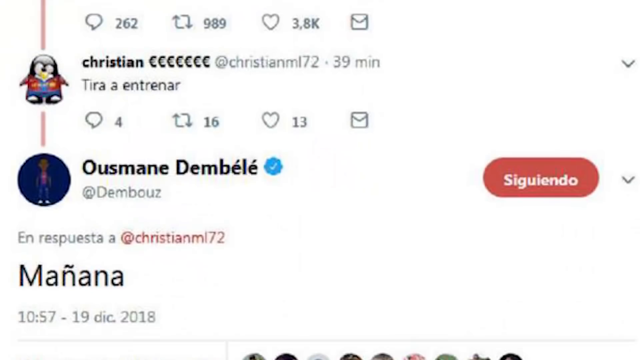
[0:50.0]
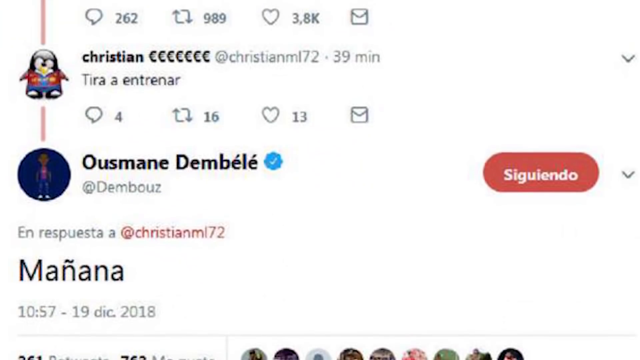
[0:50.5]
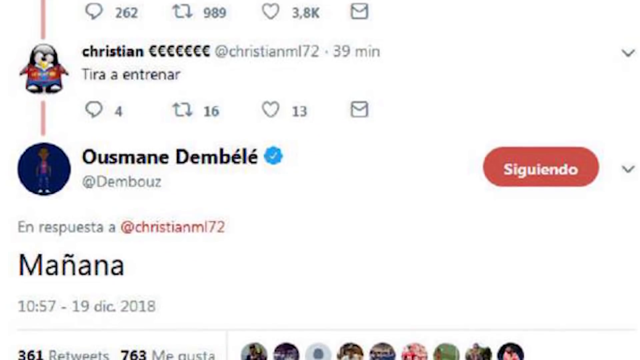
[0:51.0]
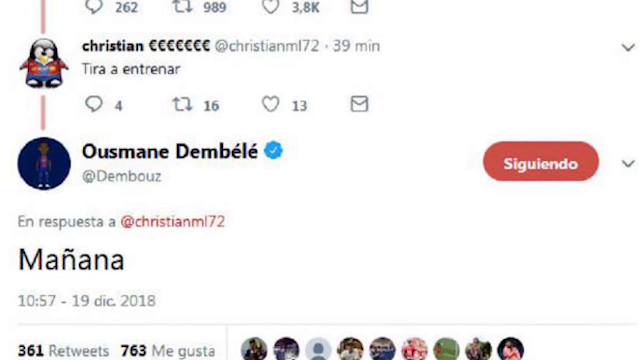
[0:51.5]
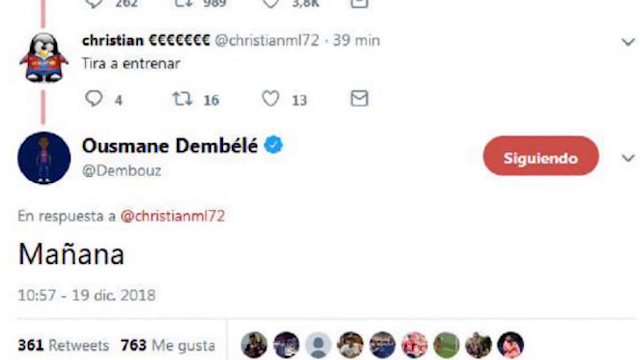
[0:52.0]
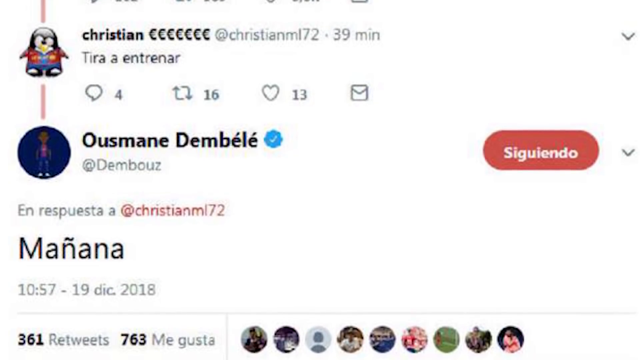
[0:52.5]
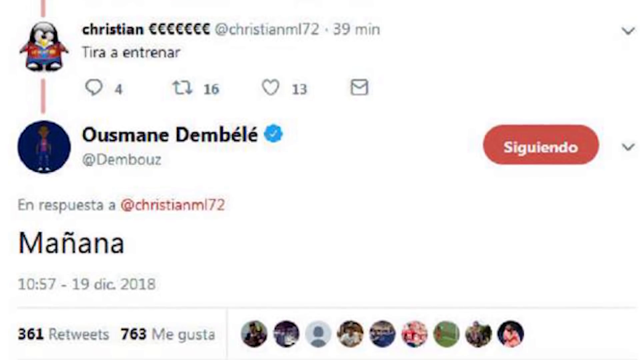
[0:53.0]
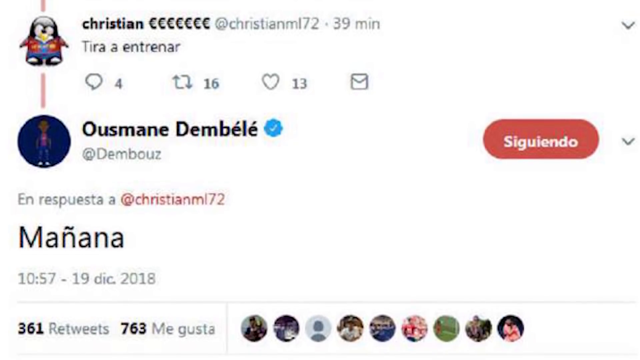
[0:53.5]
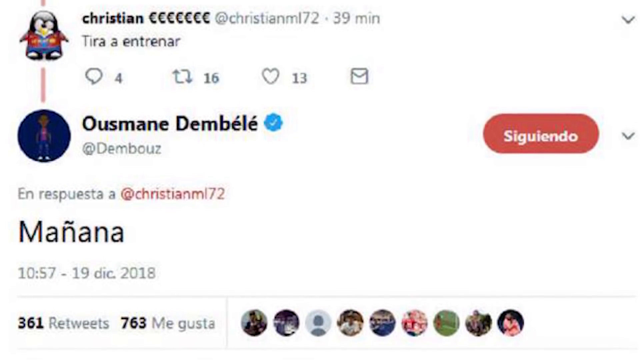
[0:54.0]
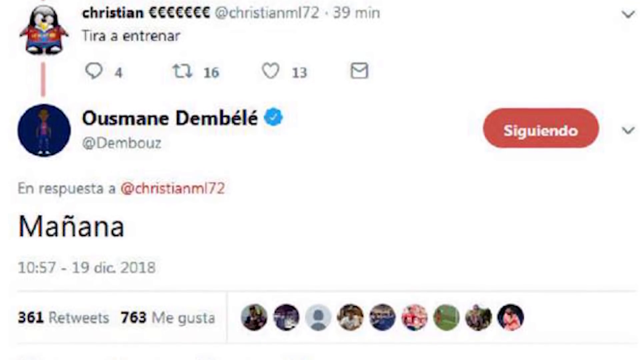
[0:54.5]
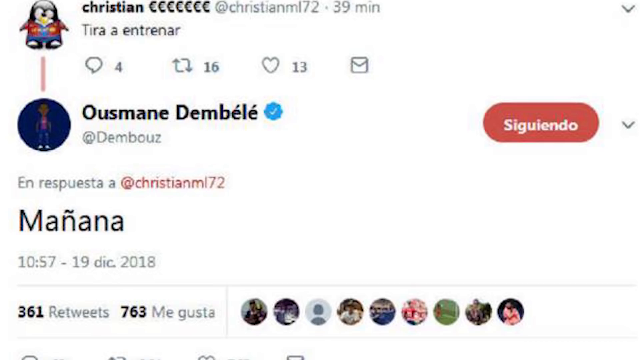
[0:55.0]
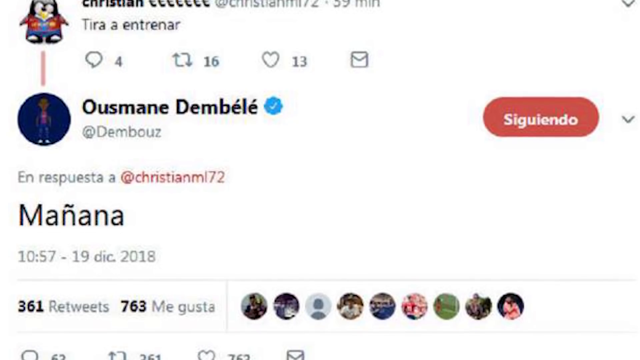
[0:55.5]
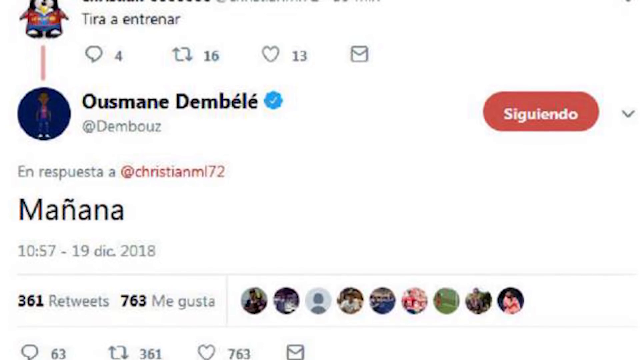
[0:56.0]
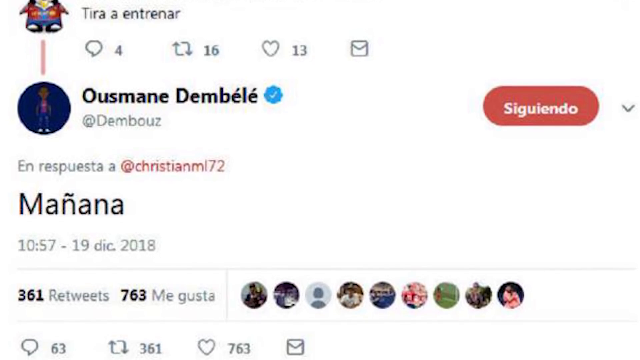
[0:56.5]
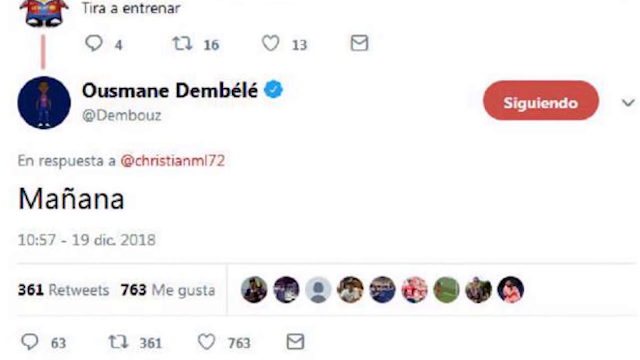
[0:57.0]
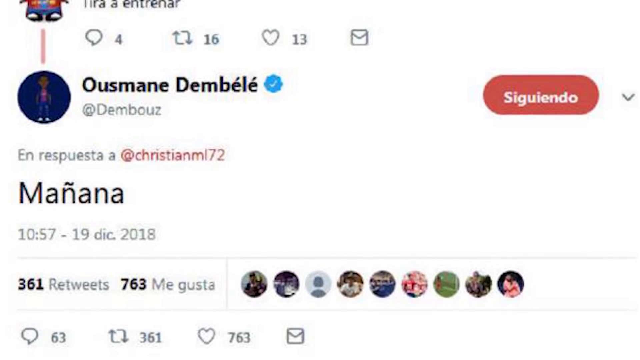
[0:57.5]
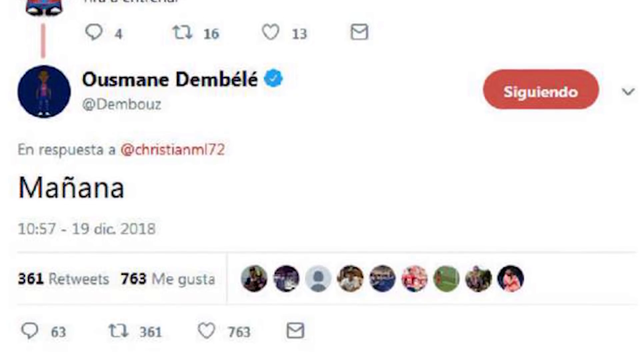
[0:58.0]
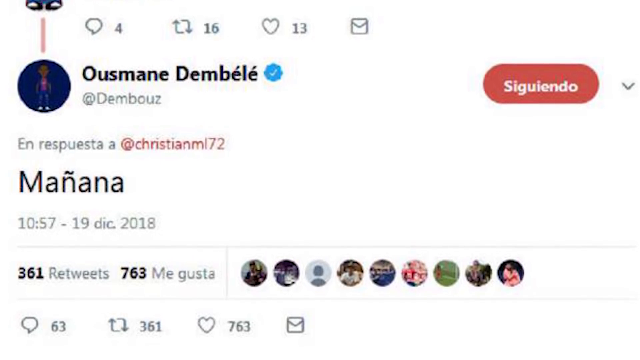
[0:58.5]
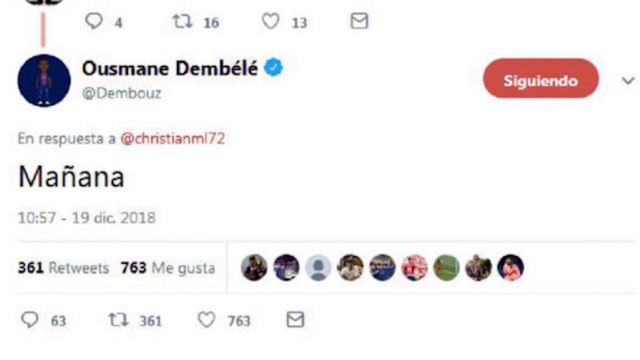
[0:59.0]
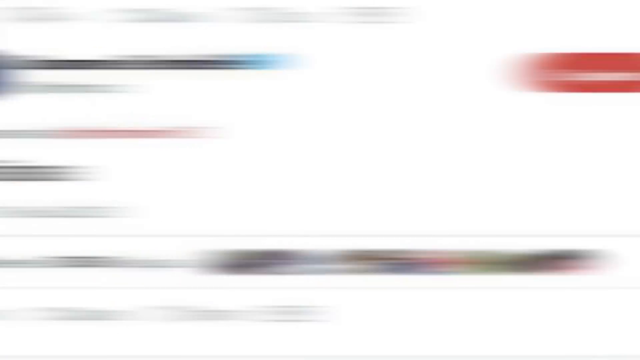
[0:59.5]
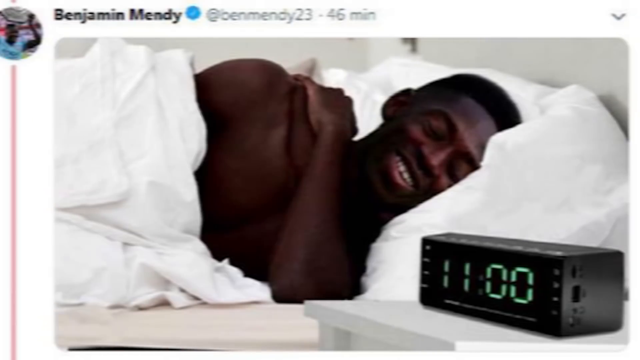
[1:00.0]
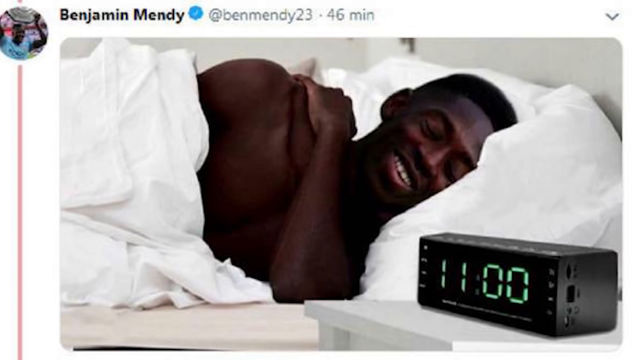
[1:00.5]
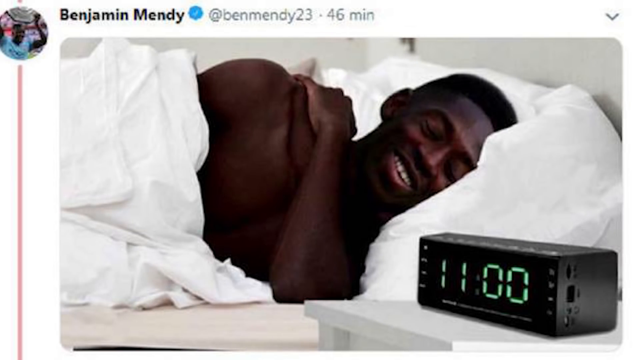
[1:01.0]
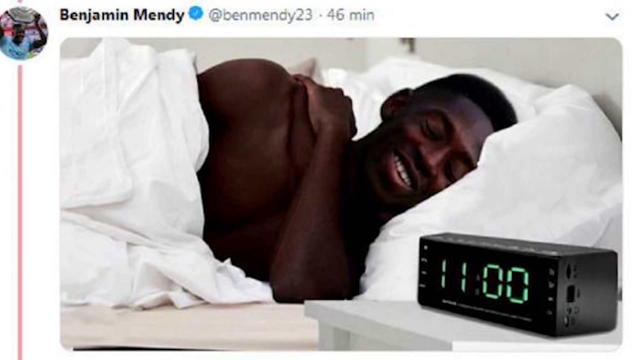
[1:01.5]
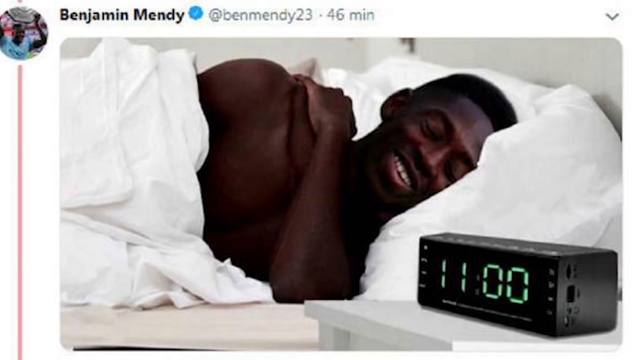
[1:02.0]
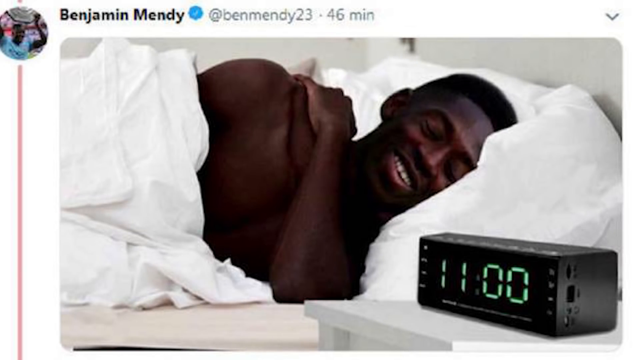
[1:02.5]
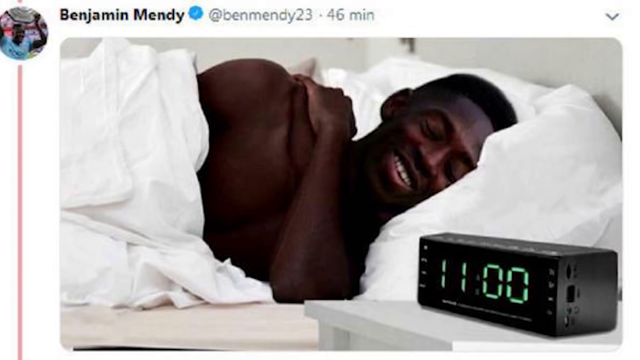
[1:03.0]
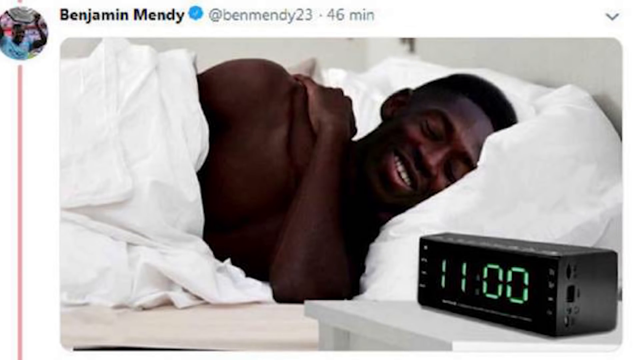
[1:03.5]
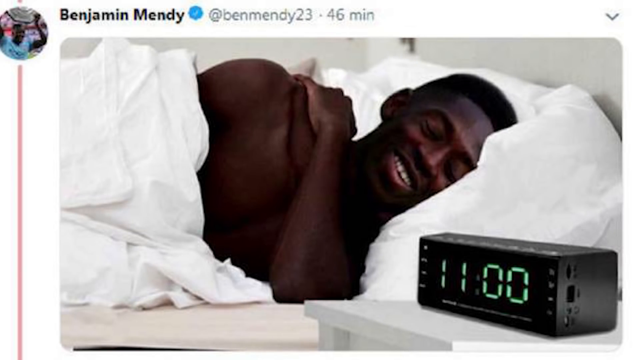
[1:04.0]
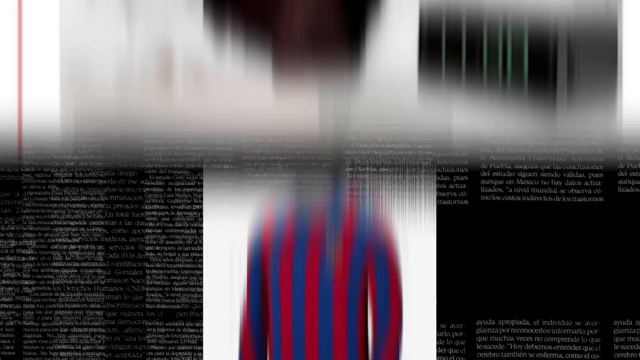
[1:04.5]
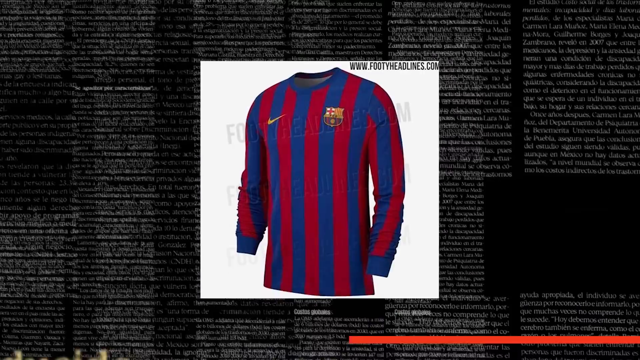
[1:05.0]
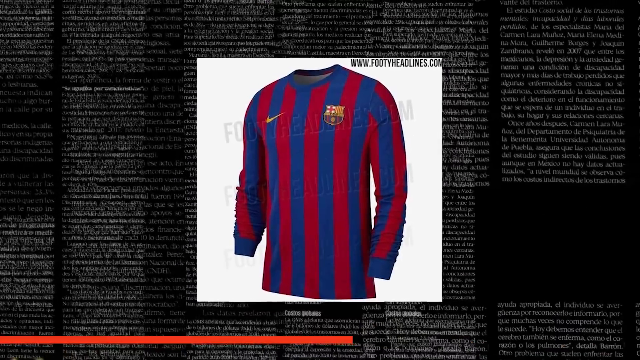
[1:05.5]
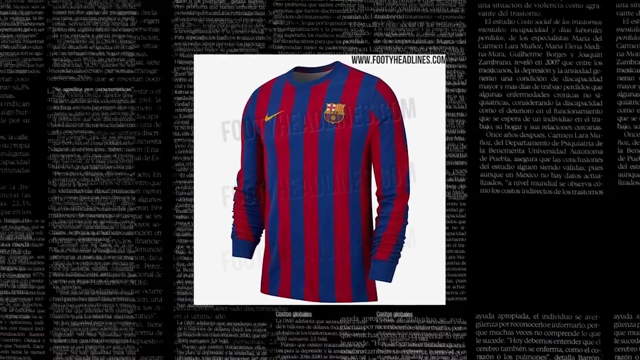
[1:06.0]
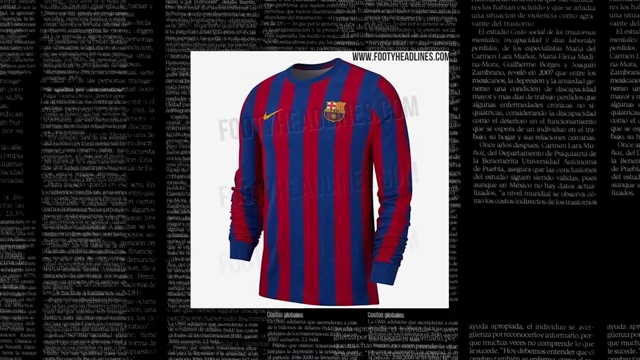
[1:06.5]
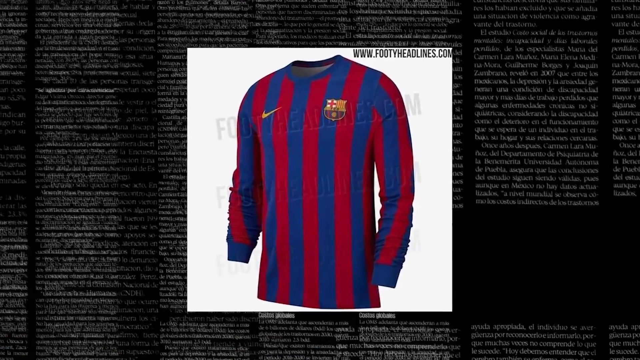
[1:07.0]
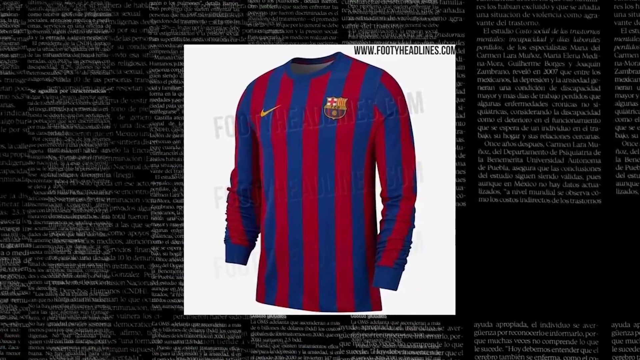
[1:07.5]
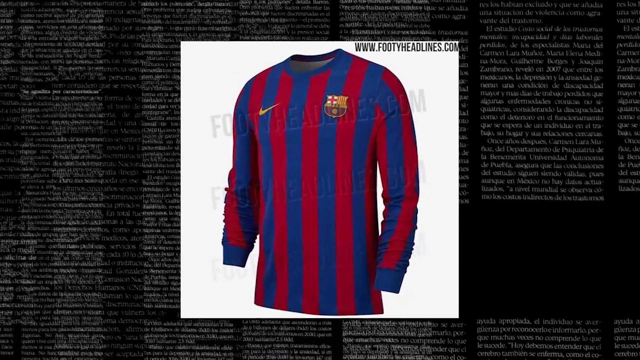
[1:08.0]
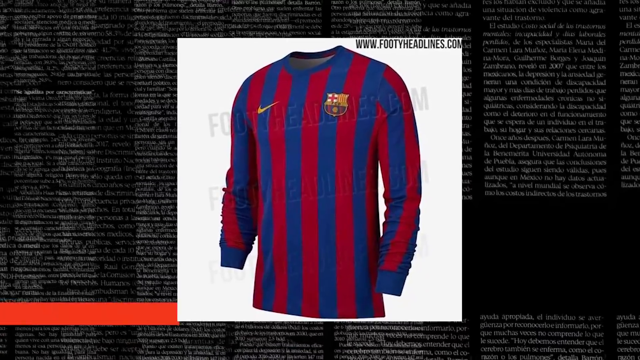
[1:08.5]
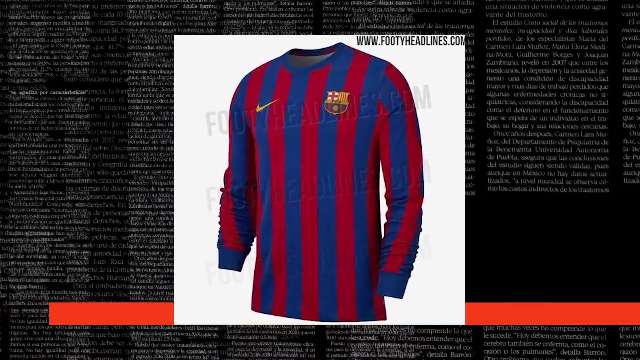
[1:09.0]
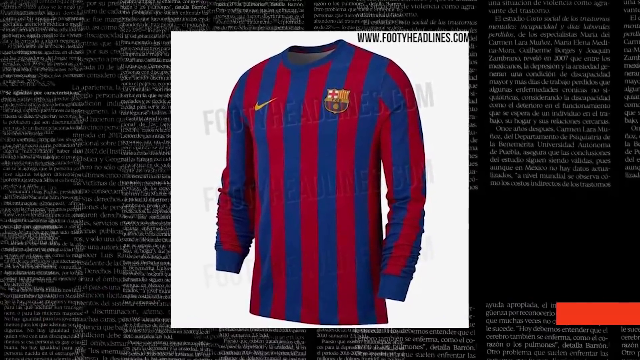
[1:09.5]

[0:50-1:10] A close-up of a sort of text exchange in Spanish is shown. The word "Christian" is at the top, followed by some emojis, then "Tira Intranar", and below that another name, "Ousmane Dembele", then "manana". It lists 361 retweets and shows how many likes. Next an image shows a shirtless African-American man who seems to be in bed, with a white cushy pillow and a white blanket over him; a digital clock radio appliance shows 11 o'clock. He is smiling with his eyes closed and seems to be sleeping. Then an image of a long-sleeved shirt or jersey is shown, with "www.footyheadlines.com" at the top. The shirt is vertically striped blue and red, with a Nike swoosh and sort of a coat of arms on the uniform's left side.